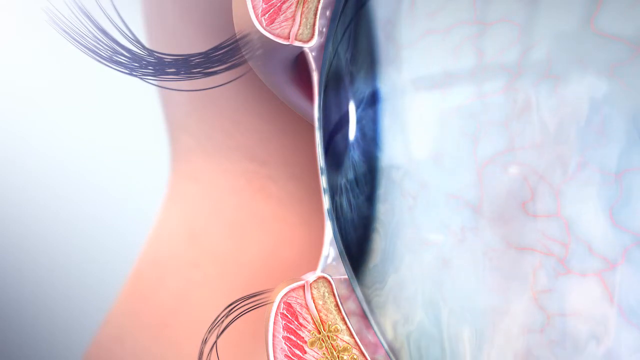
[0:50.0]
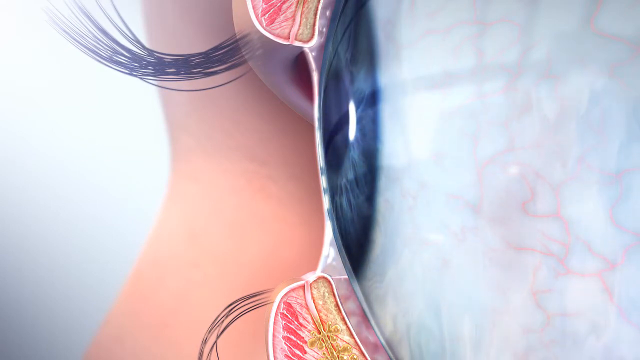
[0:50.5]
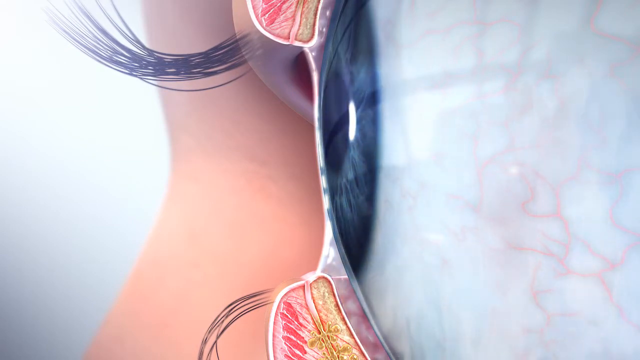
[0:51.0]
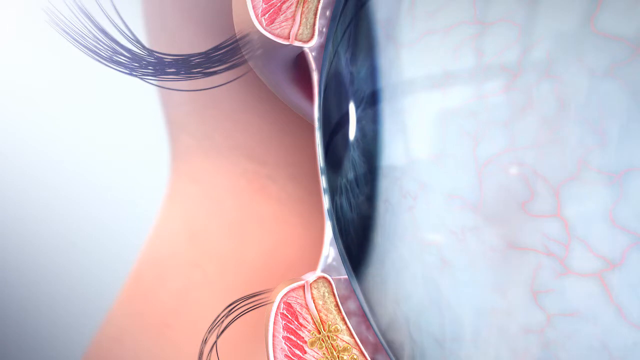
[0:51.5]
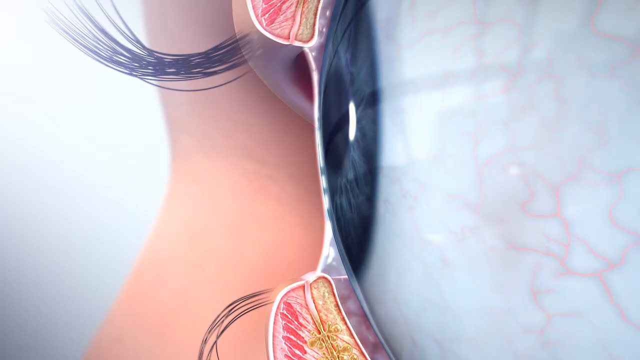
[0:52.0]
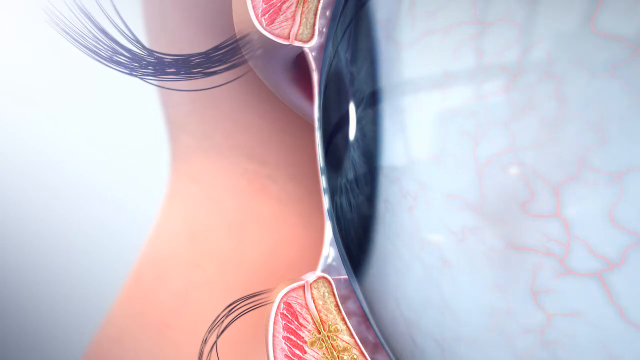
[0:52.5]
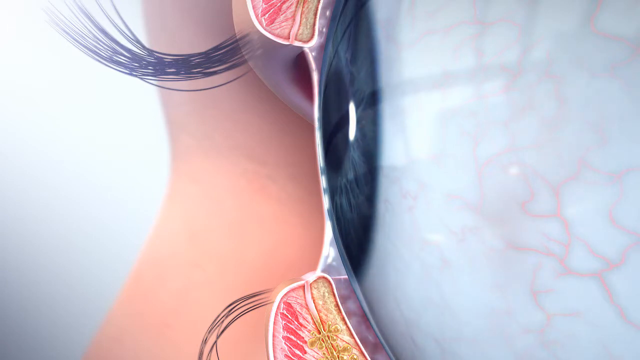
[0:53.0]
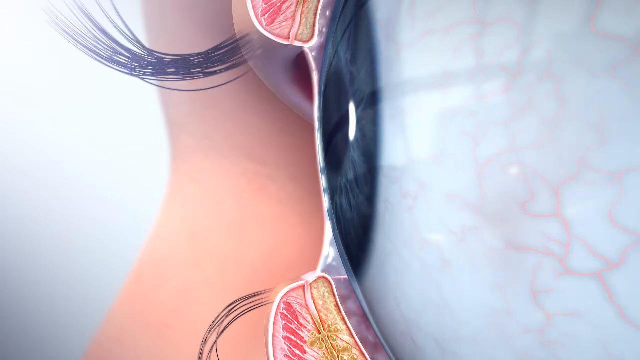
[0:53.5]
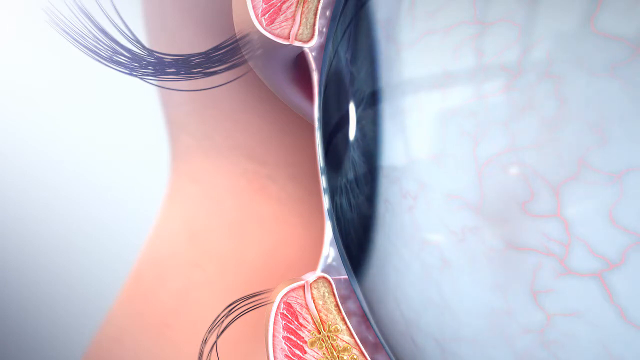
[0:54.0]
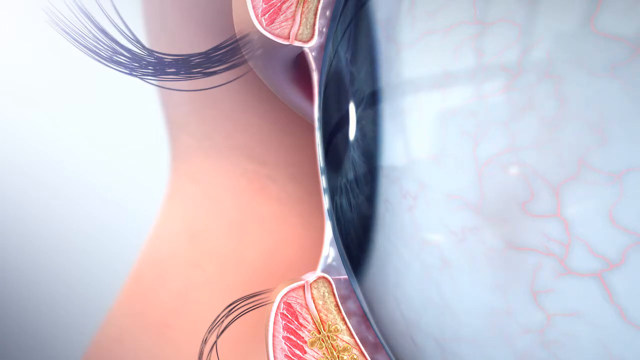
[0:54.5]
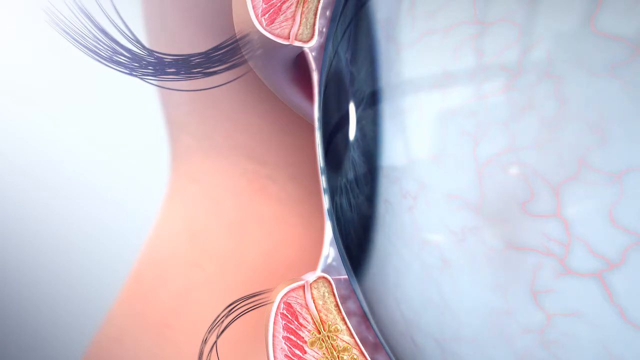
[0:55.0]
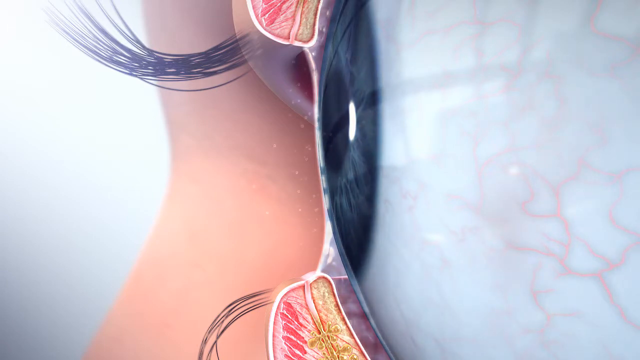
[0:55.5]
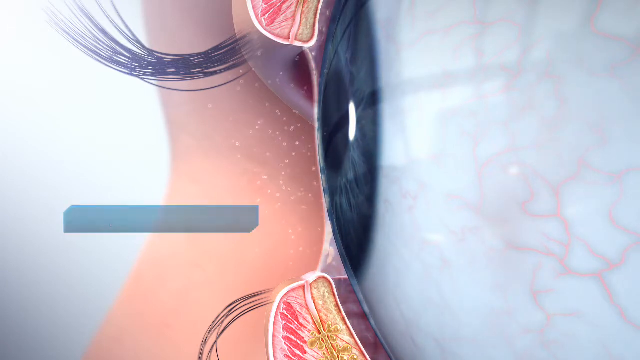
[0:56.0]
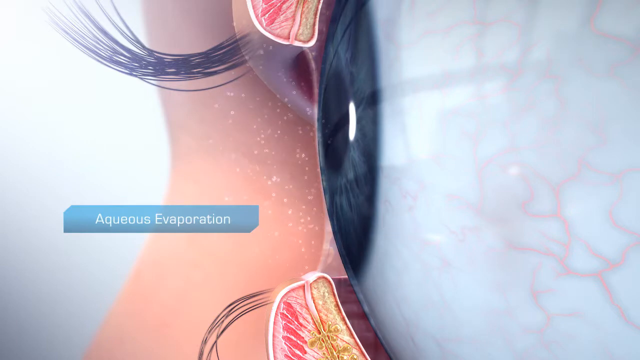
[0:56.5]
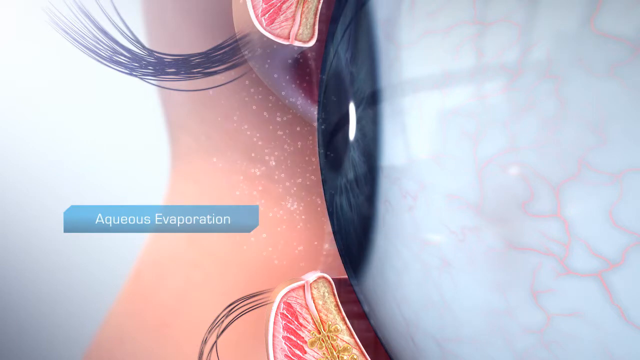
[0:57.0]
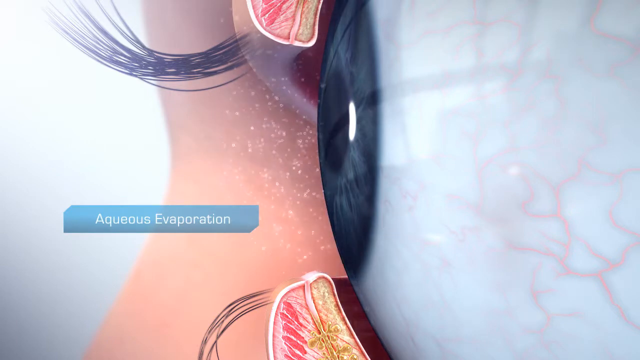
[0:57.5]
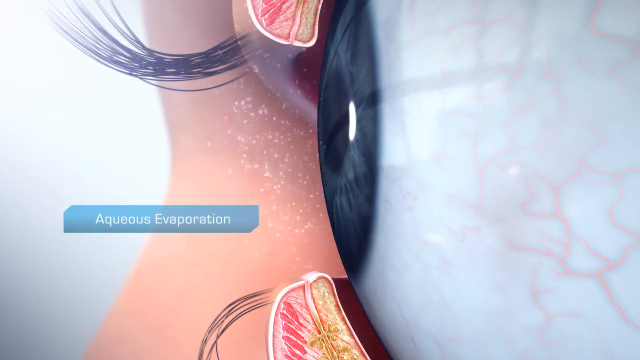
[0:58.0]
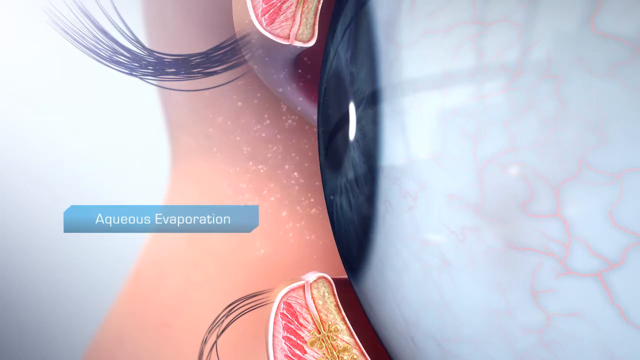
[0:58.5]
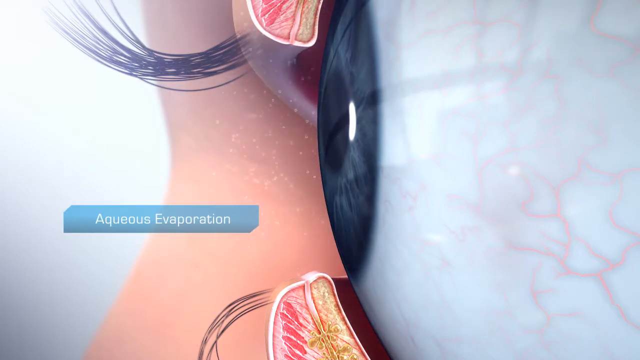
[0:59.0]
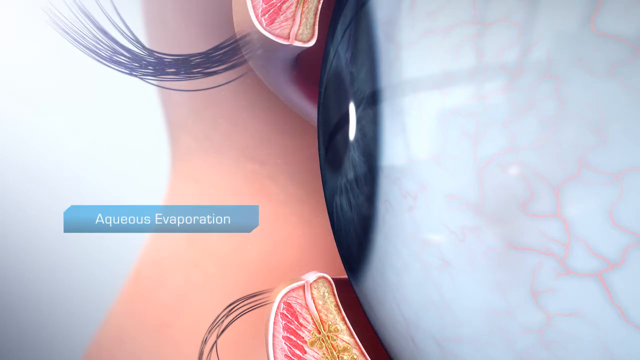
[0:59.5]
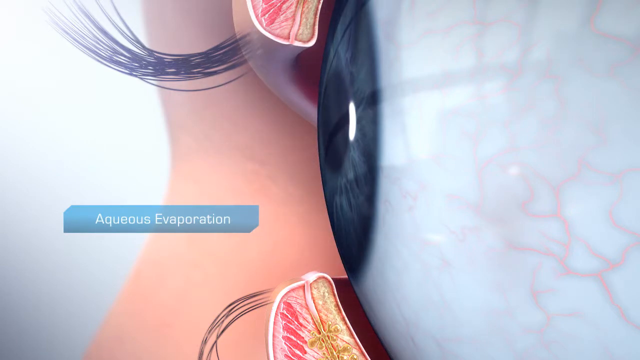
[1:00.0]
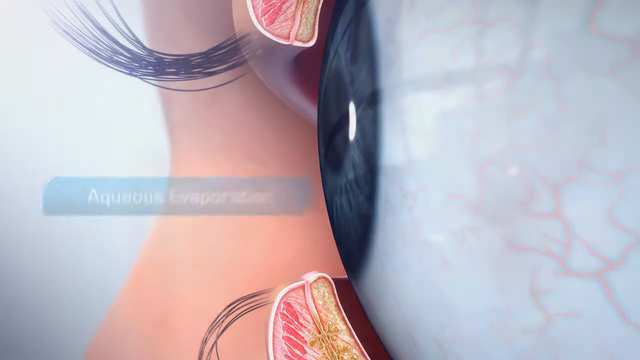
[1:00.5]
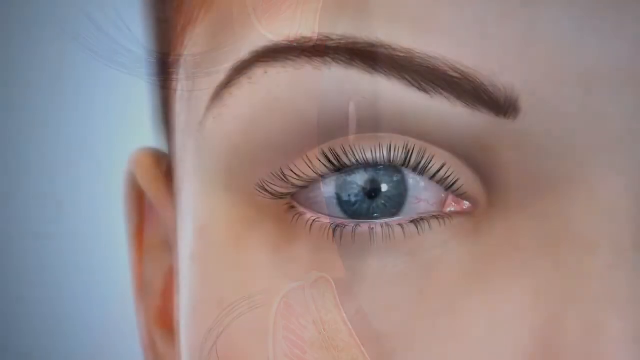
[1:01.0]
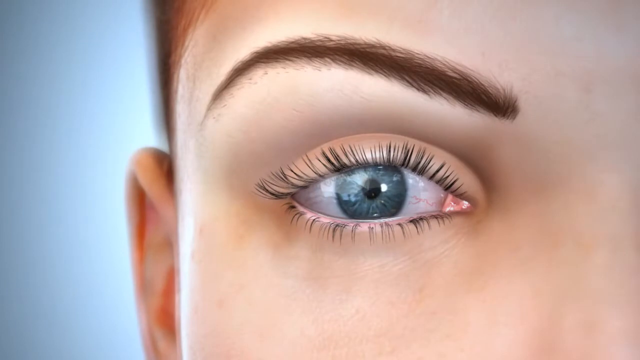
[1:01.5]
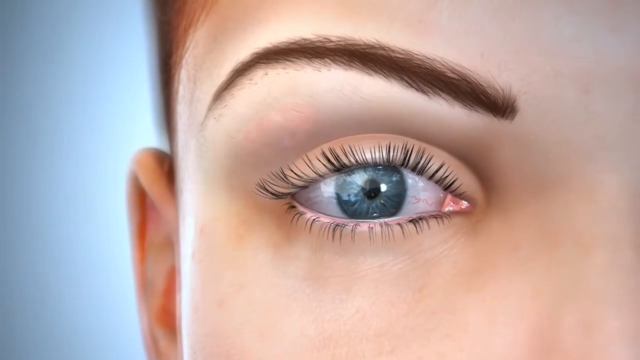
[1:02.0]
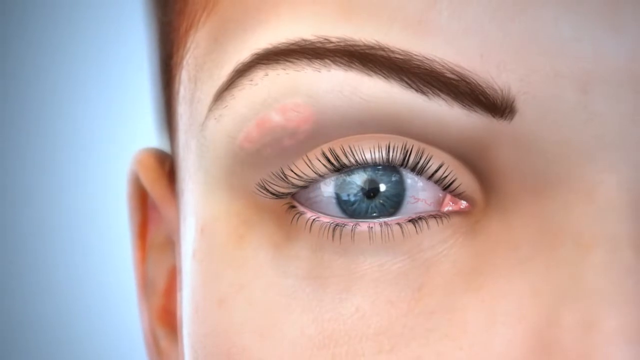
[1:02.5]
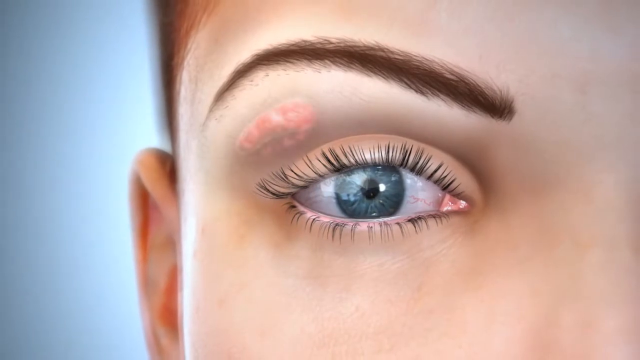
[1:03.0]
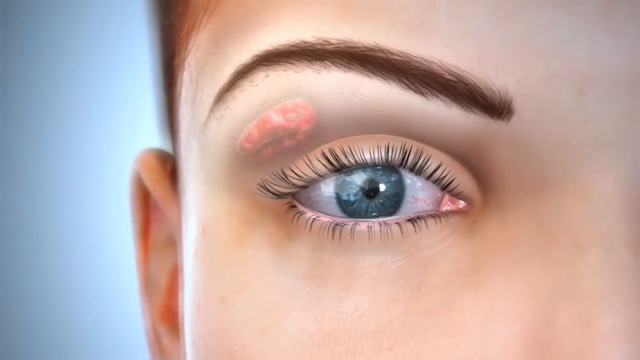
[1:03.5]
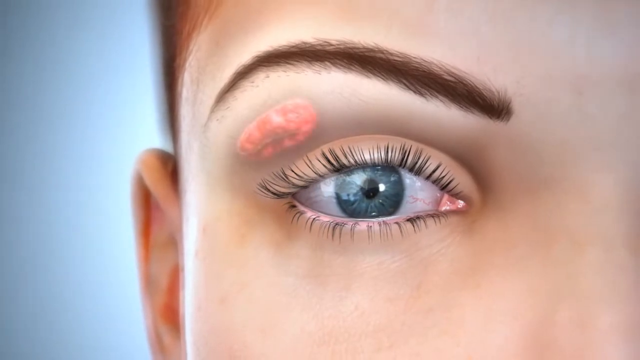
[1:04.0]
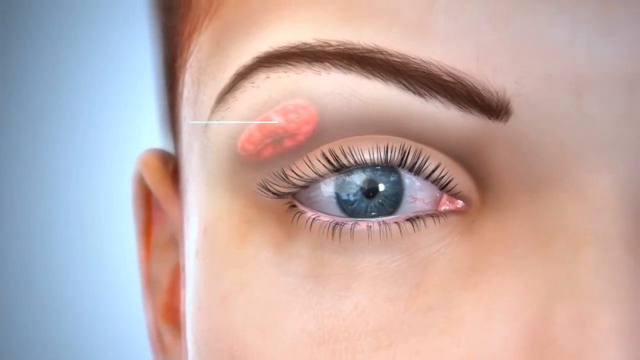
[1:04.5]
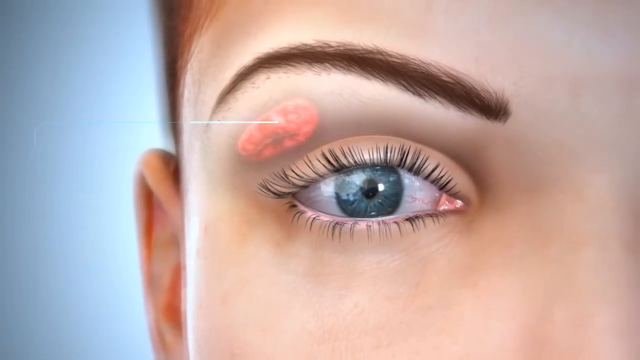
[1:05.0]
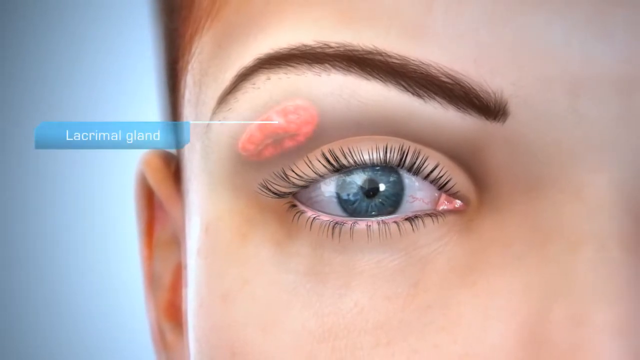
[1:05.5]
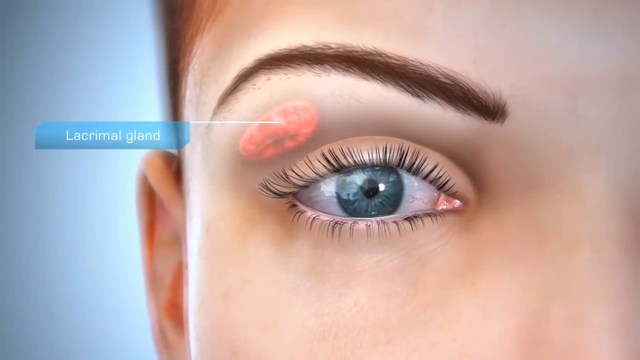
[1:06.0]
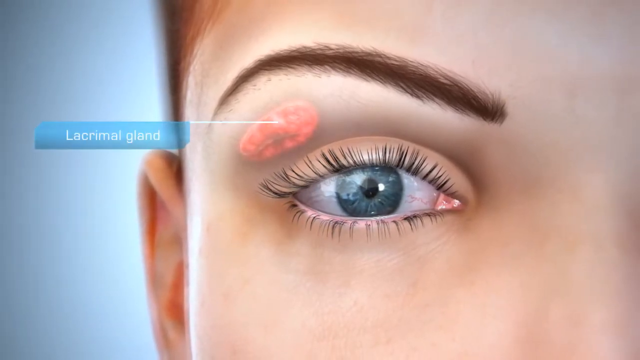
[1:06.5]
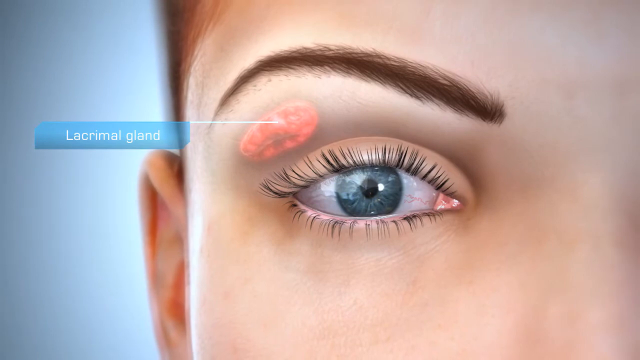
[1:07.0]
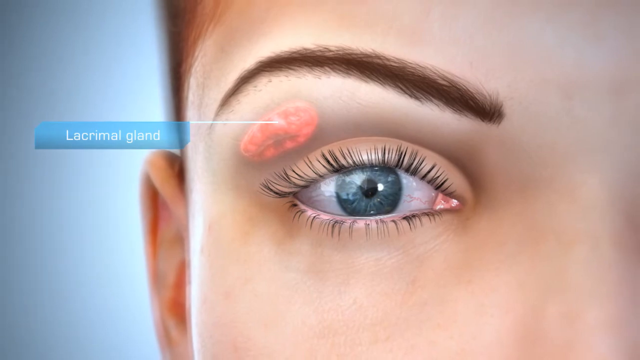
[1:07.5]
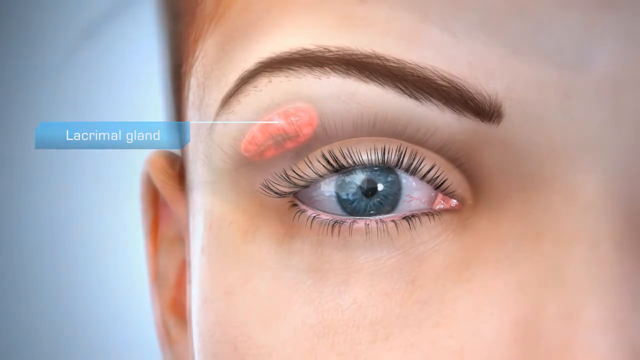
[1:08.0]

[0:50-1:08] A still very zoomed-in profile of the eyeball is shown, with the eye open and the lashes sticking out. What looks like some kind of little particles come off the eye, and a pop-up says "aqueous evaporation". The video then cuts back to a close-up of the person's right eye. Over the top, something sort of pink forms, apparently meant to show a structure underneath the skin, and text says "lacrimal gland". The gland is highlighted and made to glow so its location under the skin can be seen.